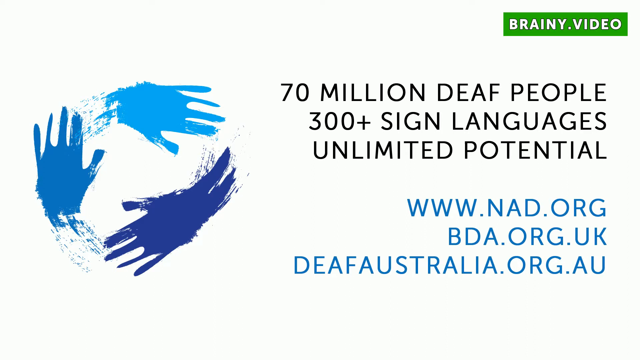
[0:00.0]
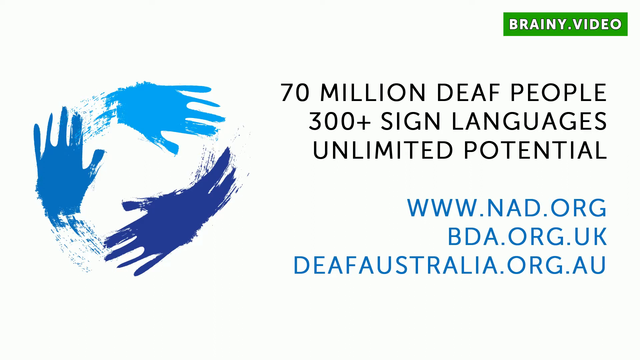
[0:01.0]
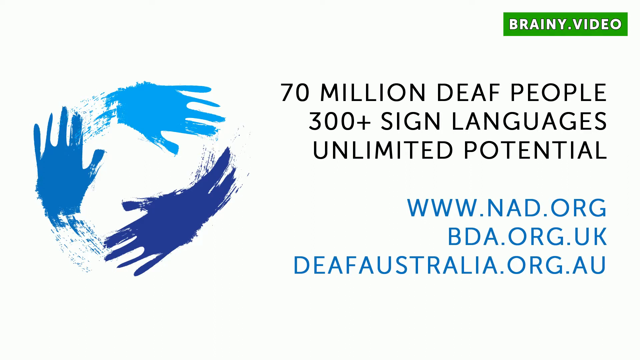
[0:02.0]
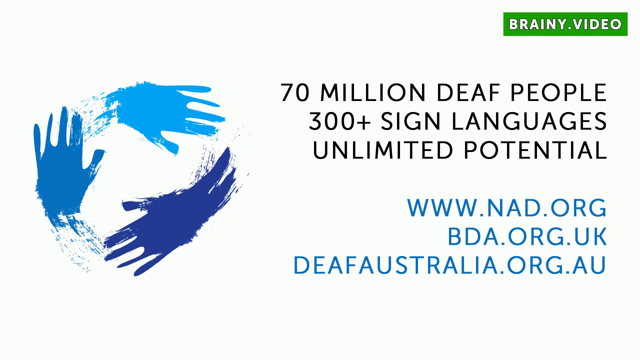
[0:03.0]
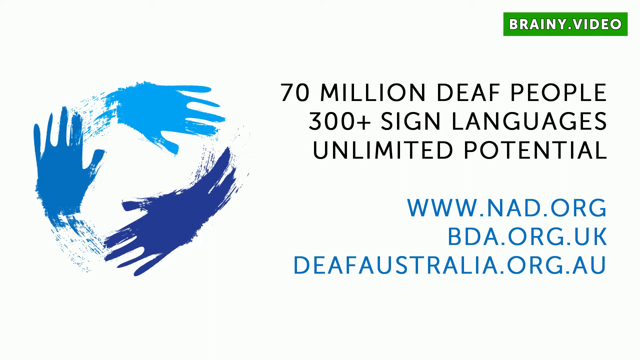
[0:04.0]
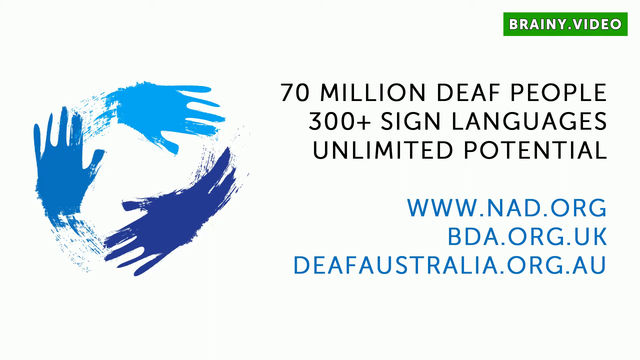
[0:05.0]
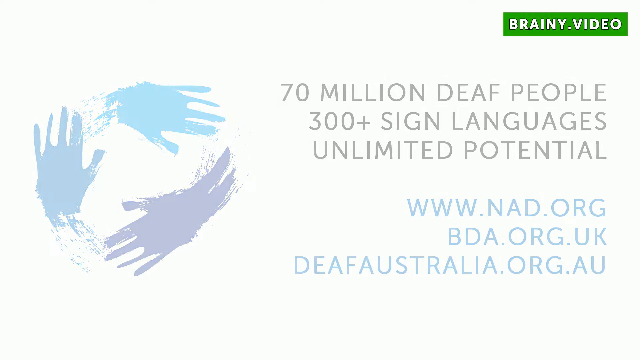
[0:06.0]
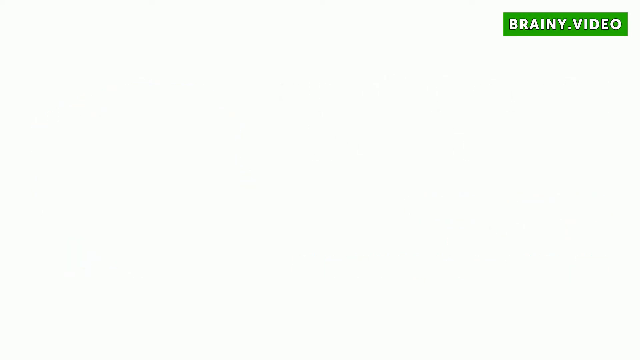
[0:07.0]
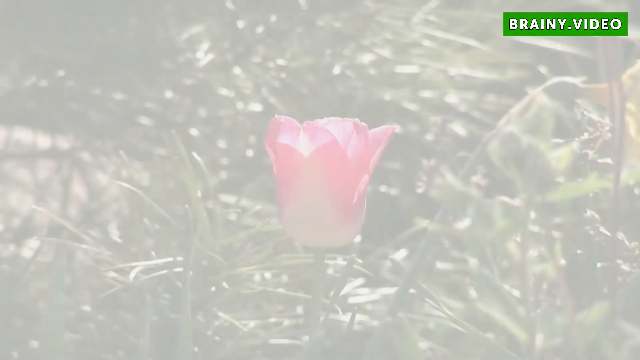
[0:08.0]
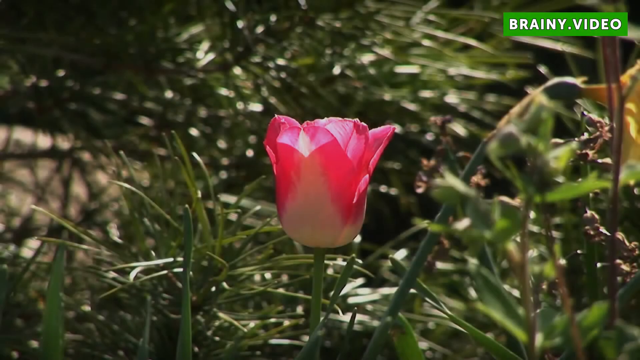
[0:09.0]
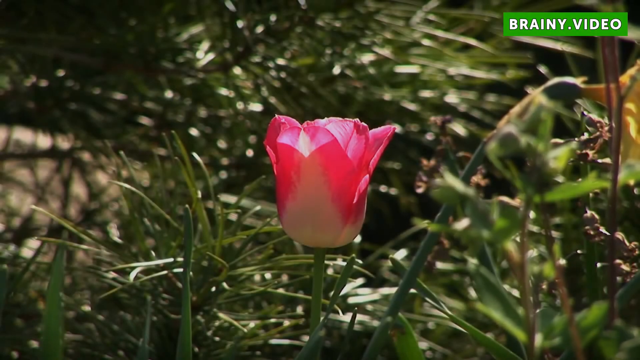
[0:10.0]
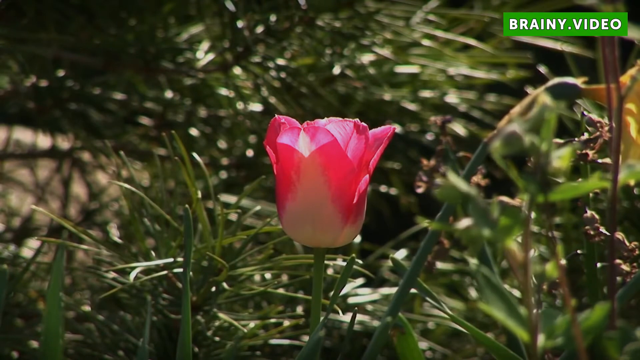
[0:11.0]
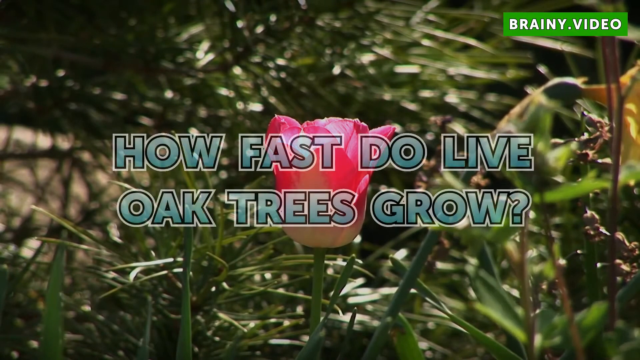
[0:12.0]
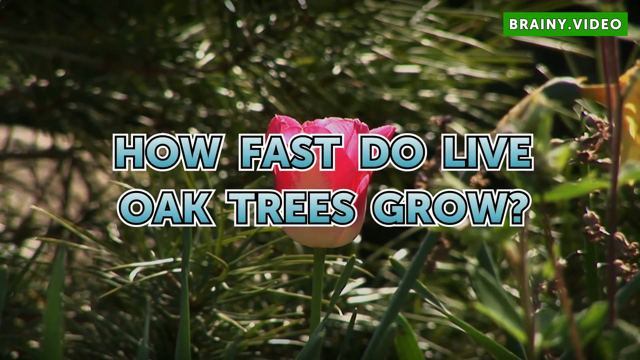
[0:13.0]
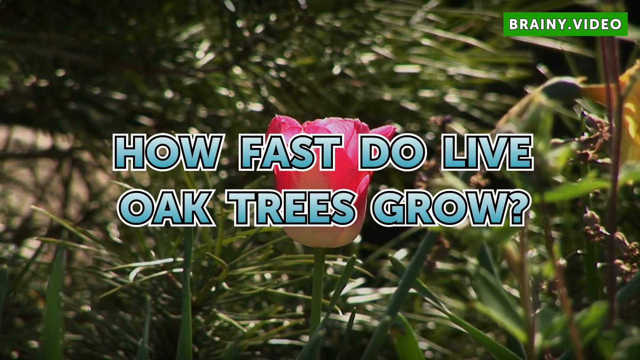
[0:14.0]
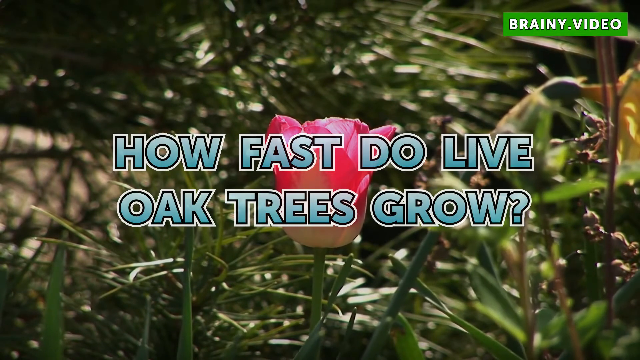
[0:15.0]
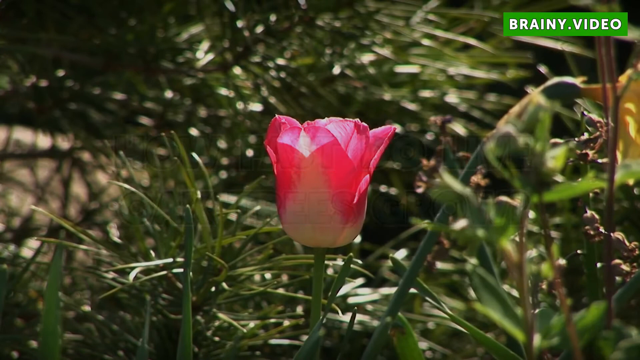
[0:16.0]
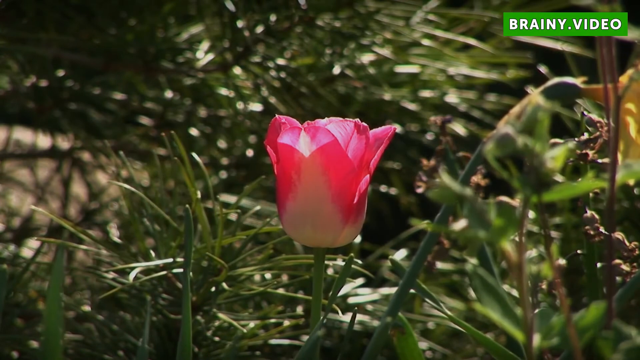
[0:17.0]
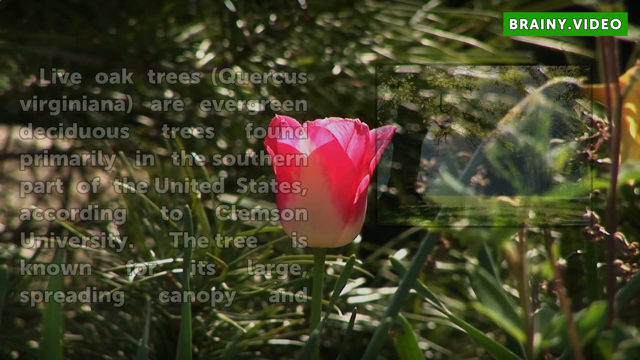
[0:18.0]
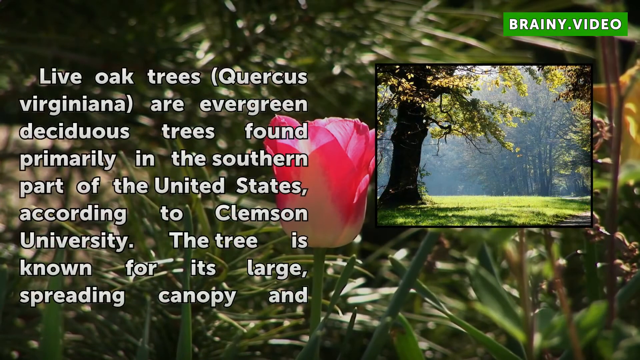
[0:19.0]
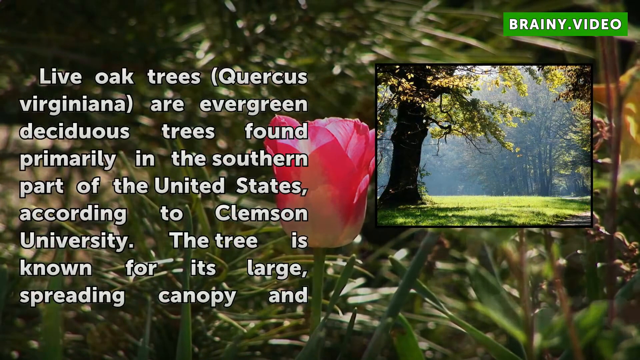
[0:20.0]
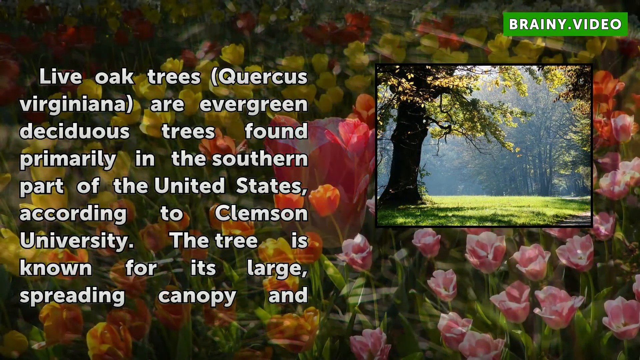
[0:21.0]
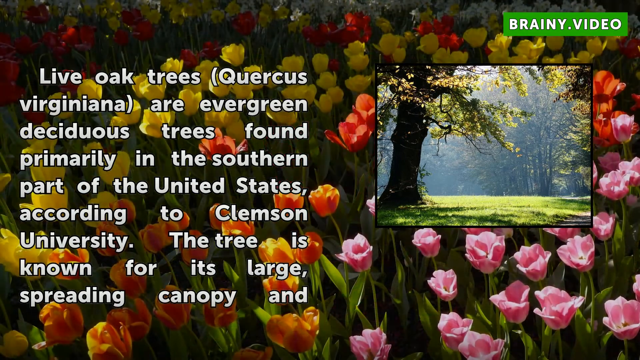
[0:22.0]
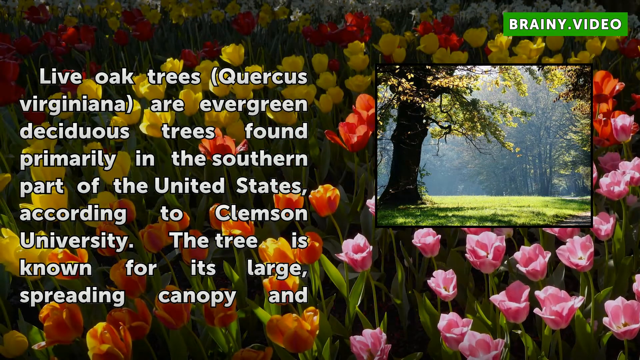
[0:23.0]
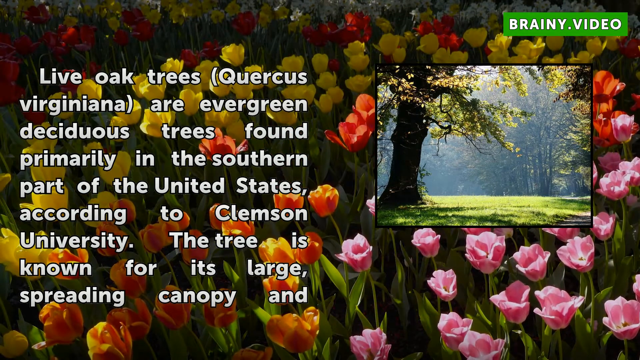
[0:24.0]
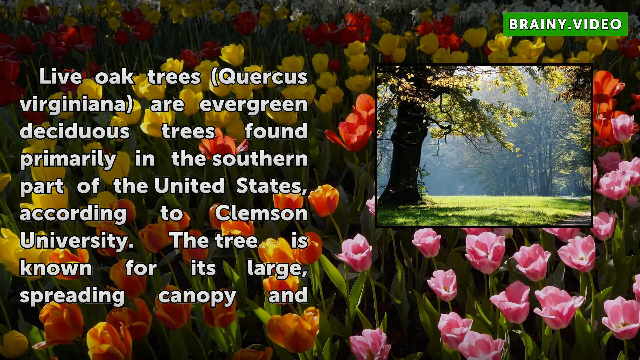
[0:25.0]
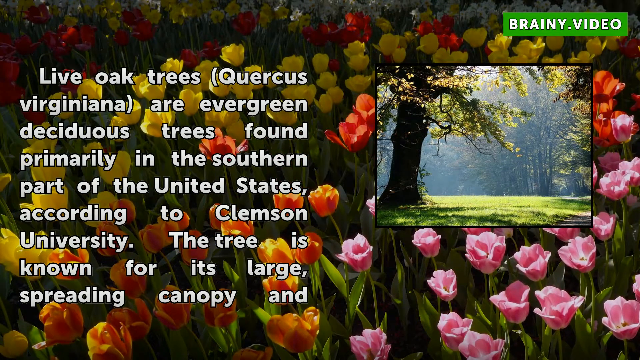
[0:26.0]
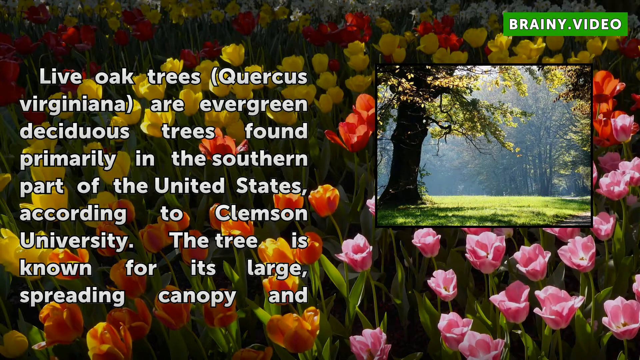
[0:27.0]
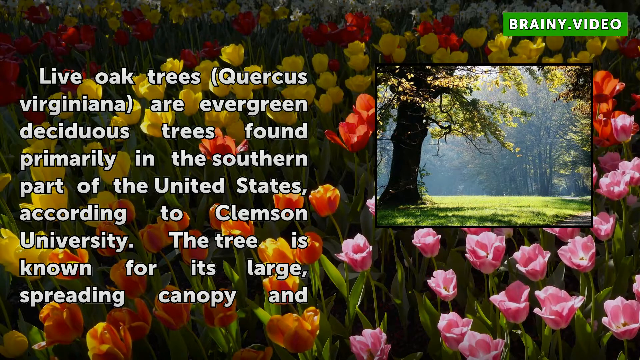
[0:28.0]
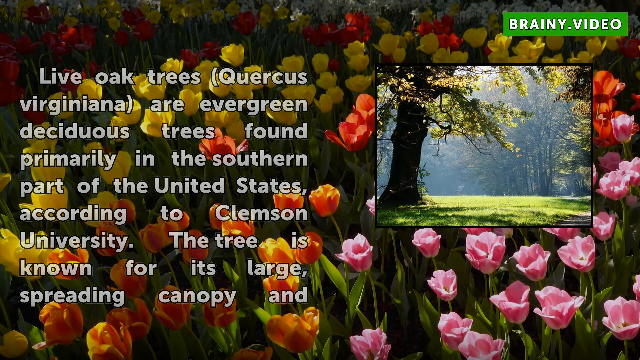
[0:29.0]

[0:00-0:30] In the upper right area, text reads "70 million deaf people, 300 plus sign languages, unlimited potential." Beneath it are three websites: "www.nad.org", "bda.org.uk" and "deafaustralia.org.au". On the left are three painted handprints, one purple, one blue and one light blue, arranged in the shape of a circle. The scene changes to a pink flower in the middle surrounded by green plants, with the title "How fast Do live oak trees grow?" in the middle. Text then appears on the left: "live oak trees are evergreen deciduous trees found primarily in the southern part of the United States, according to Clemson University. The tree is known for its large, spreading canopy and". On the right is a picture of what looks like an oak tree on a green grass field, with more trees in the background. The background of the whole screen is a mass of yellow, orange and pink flowers.